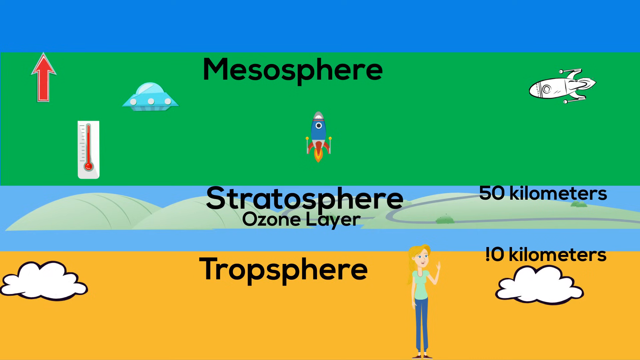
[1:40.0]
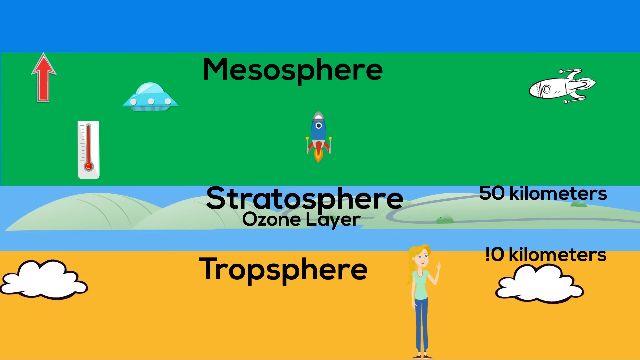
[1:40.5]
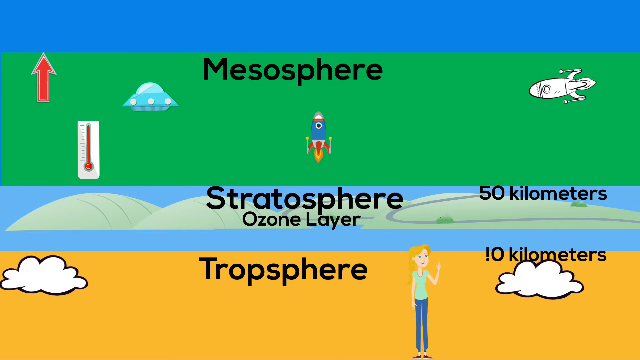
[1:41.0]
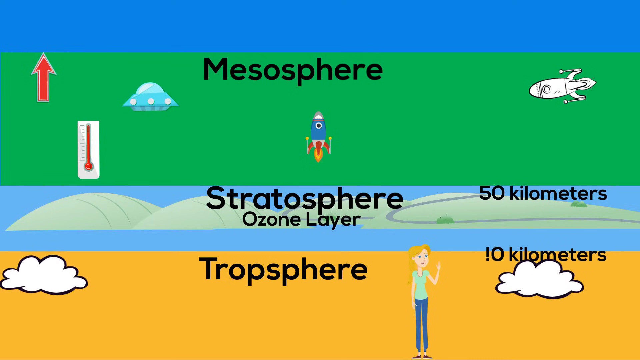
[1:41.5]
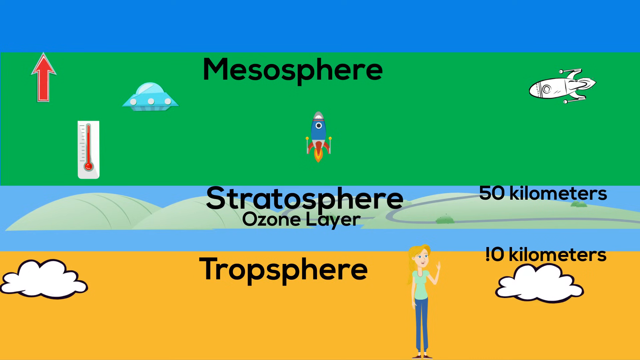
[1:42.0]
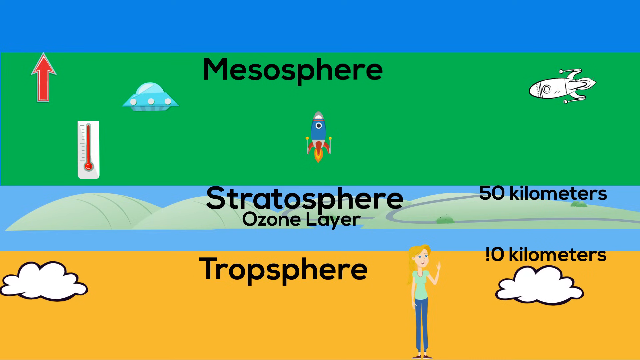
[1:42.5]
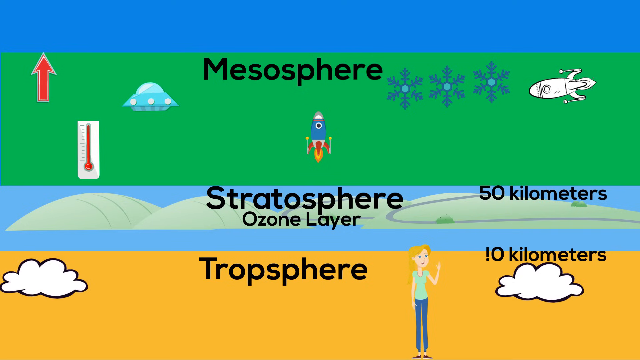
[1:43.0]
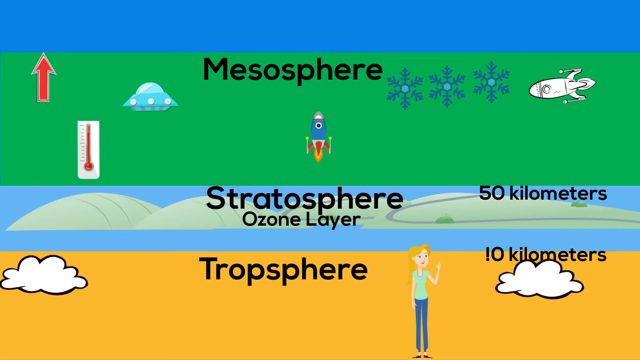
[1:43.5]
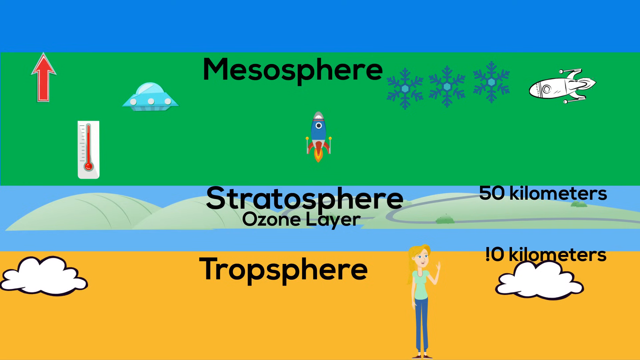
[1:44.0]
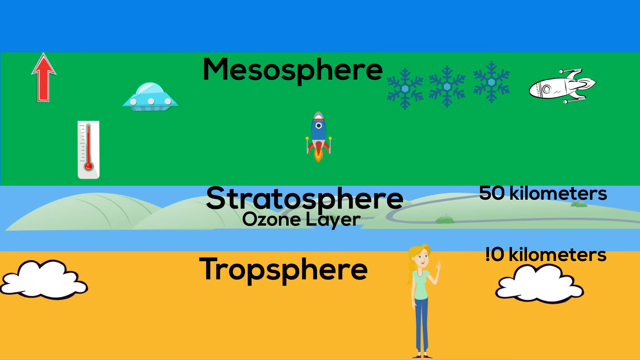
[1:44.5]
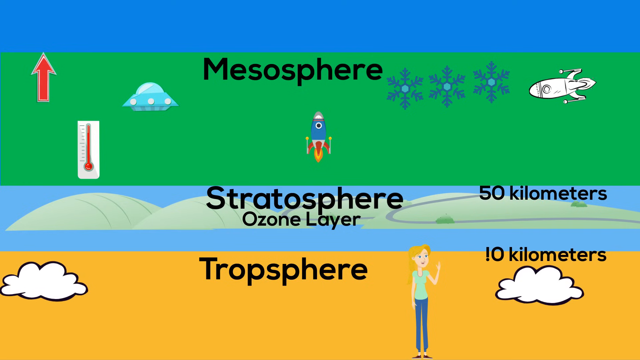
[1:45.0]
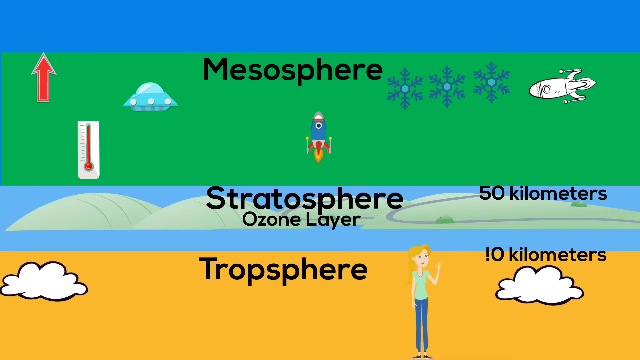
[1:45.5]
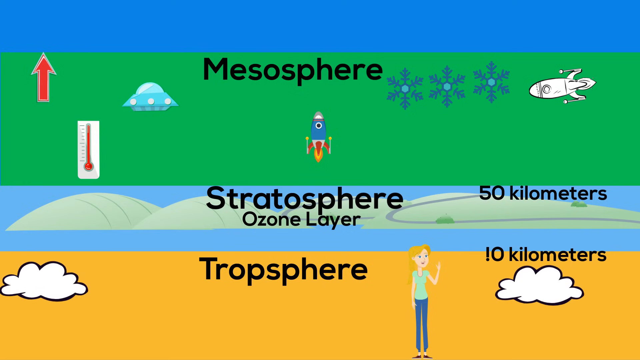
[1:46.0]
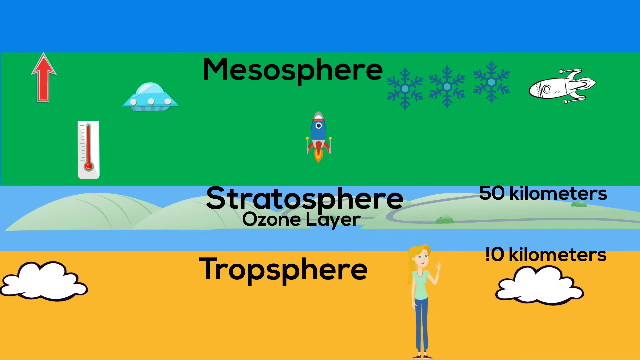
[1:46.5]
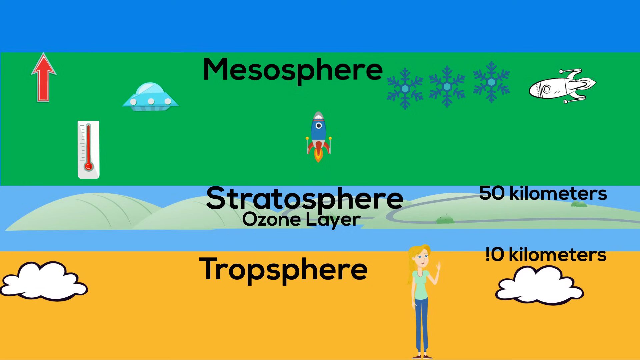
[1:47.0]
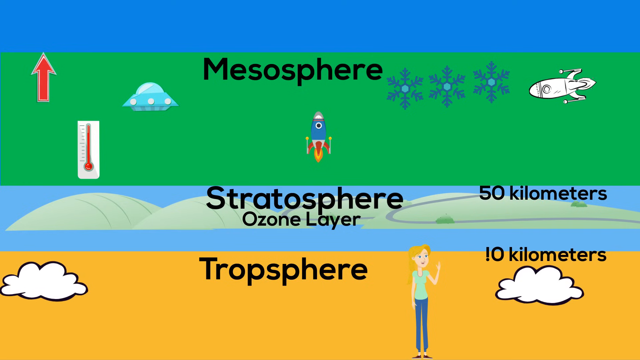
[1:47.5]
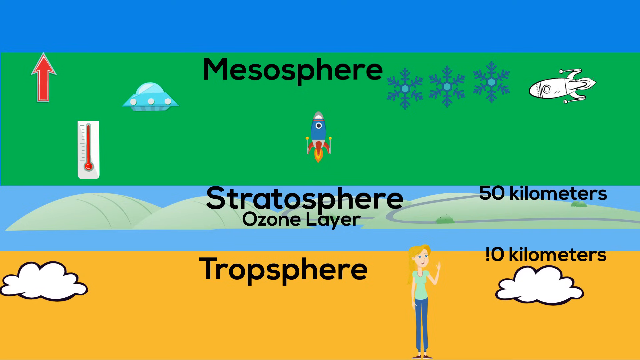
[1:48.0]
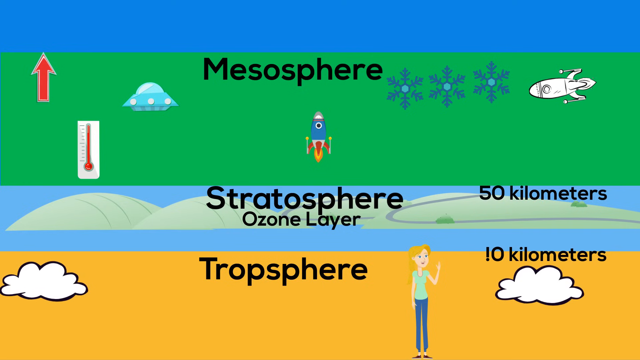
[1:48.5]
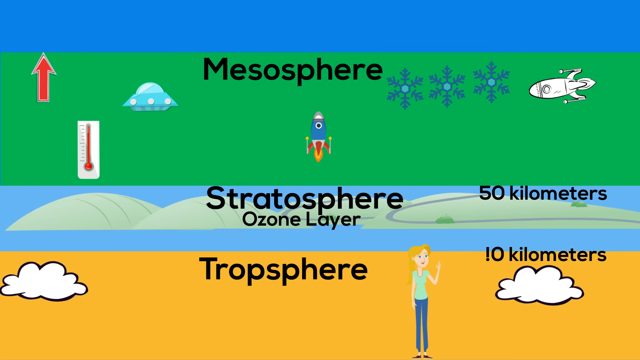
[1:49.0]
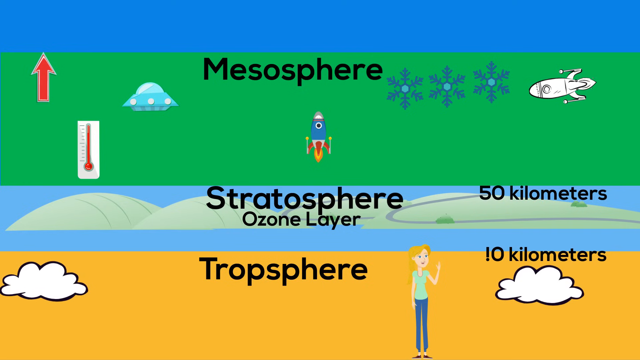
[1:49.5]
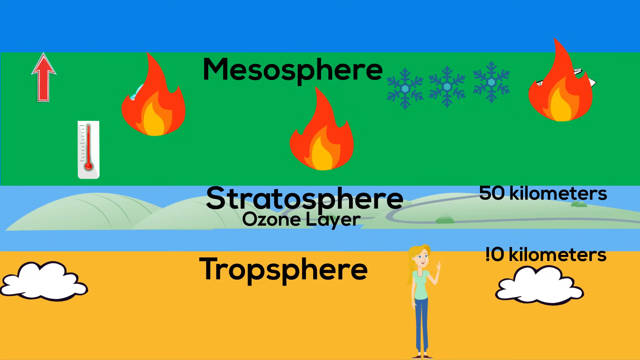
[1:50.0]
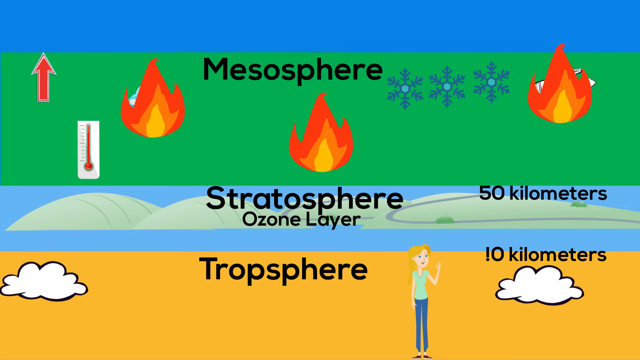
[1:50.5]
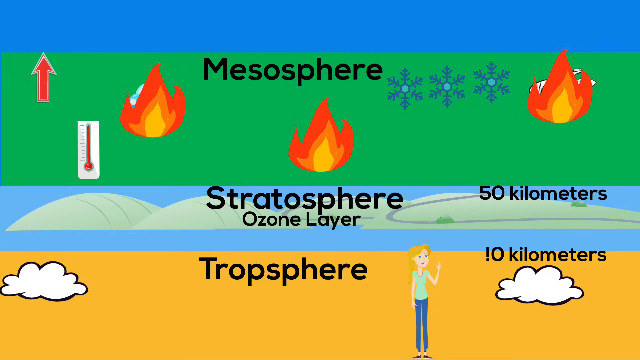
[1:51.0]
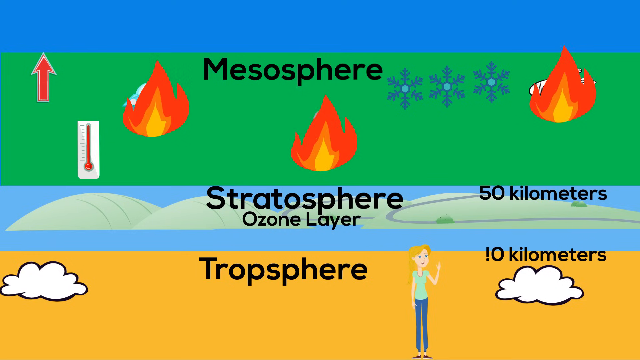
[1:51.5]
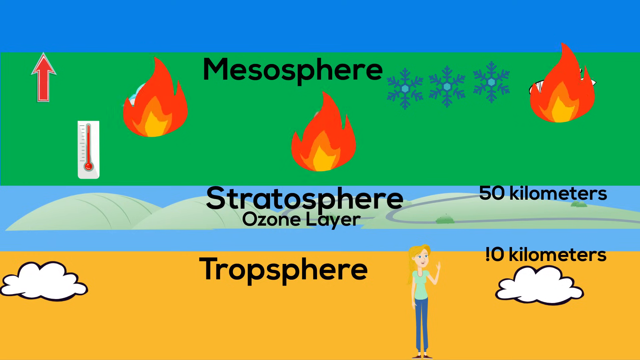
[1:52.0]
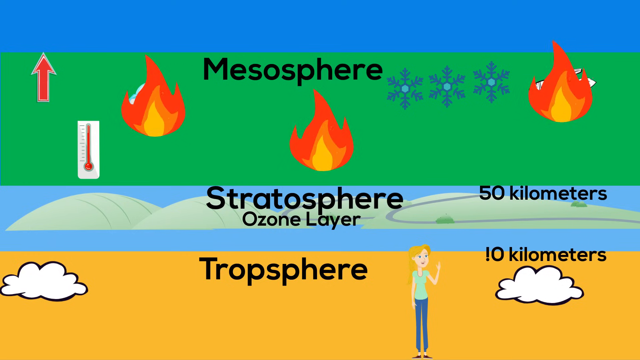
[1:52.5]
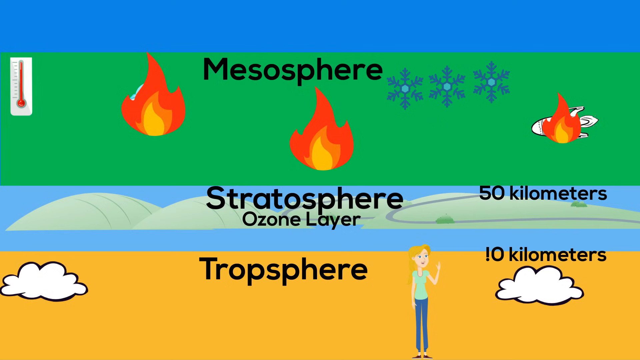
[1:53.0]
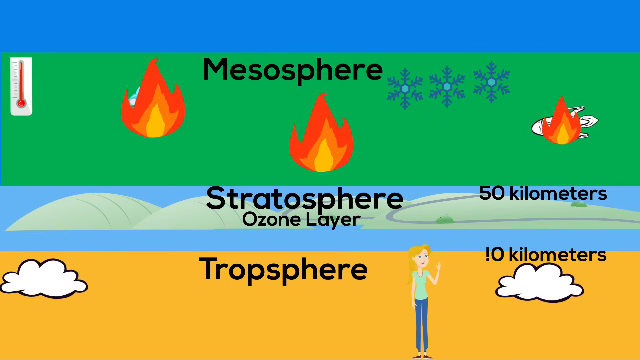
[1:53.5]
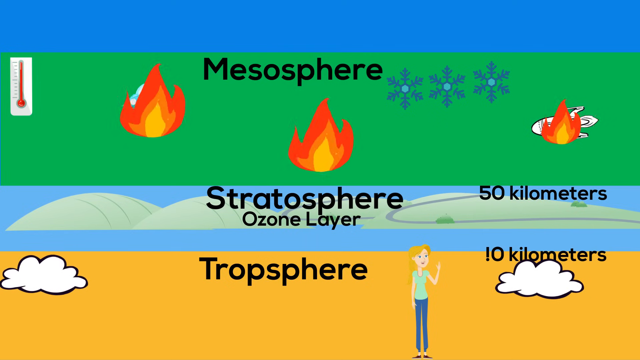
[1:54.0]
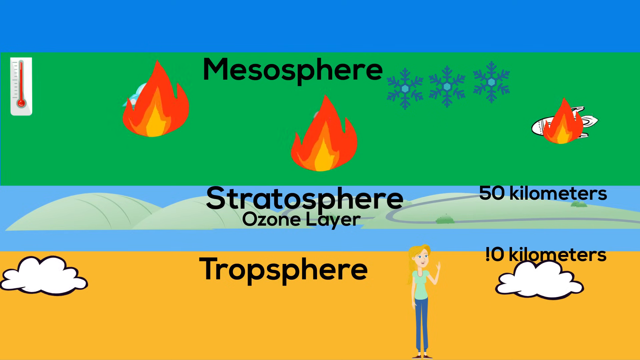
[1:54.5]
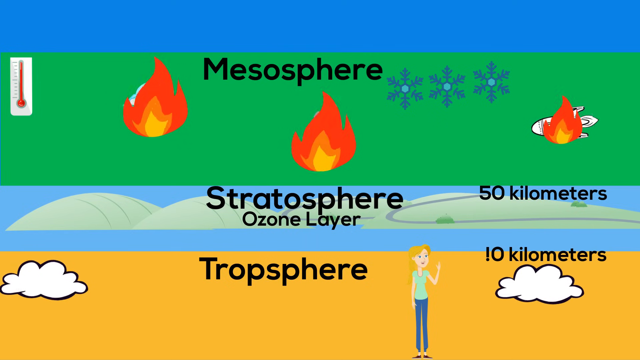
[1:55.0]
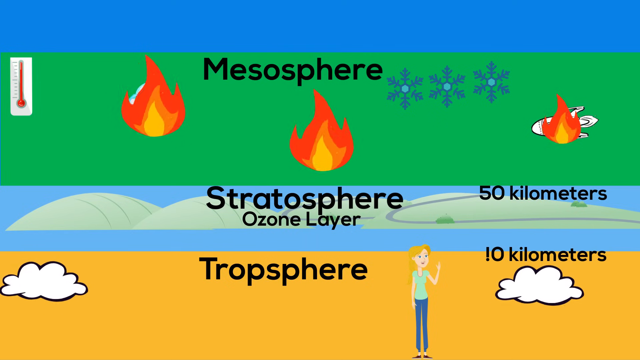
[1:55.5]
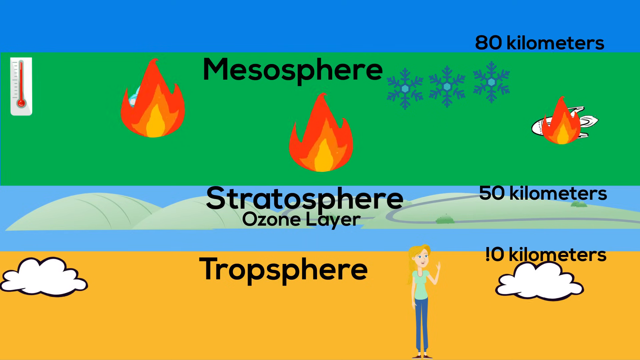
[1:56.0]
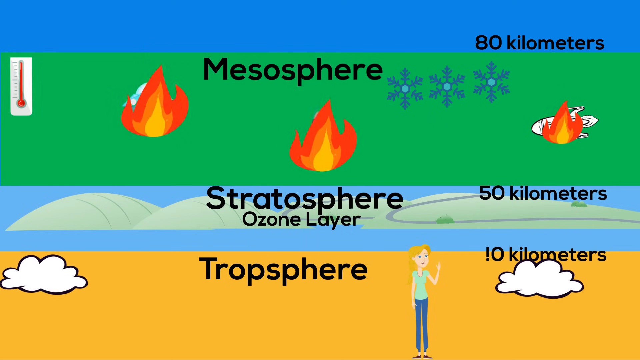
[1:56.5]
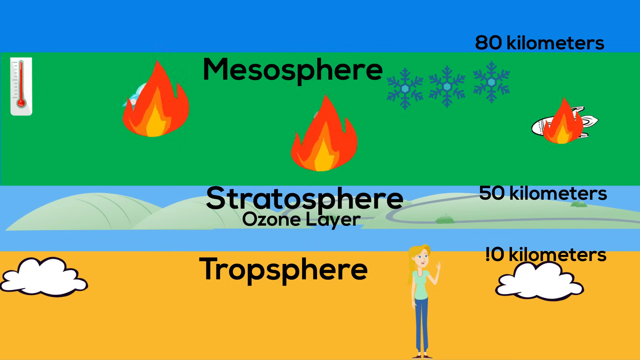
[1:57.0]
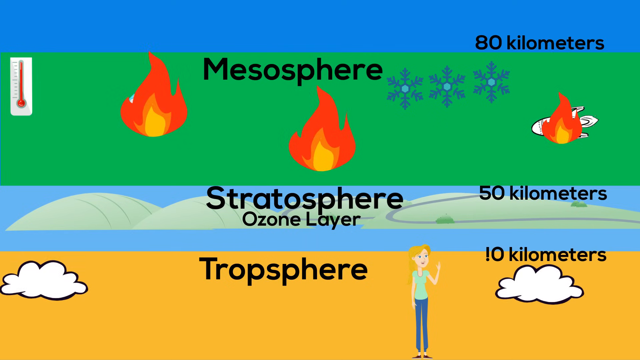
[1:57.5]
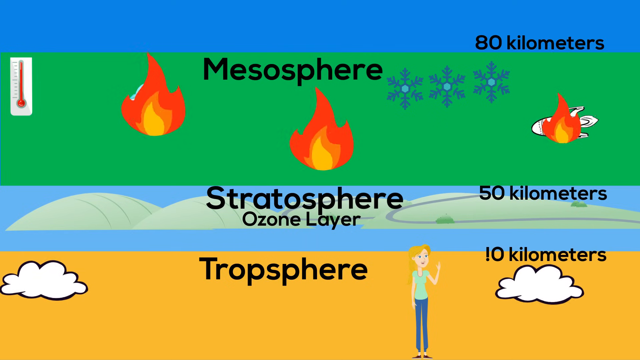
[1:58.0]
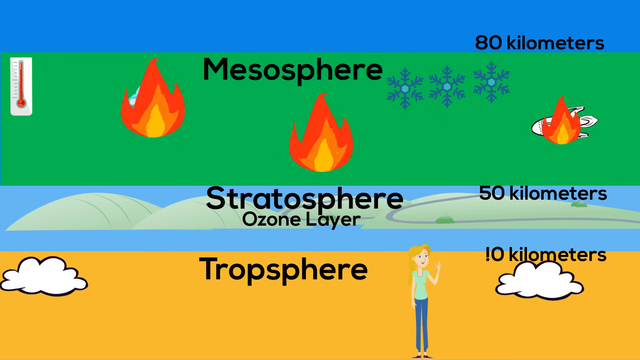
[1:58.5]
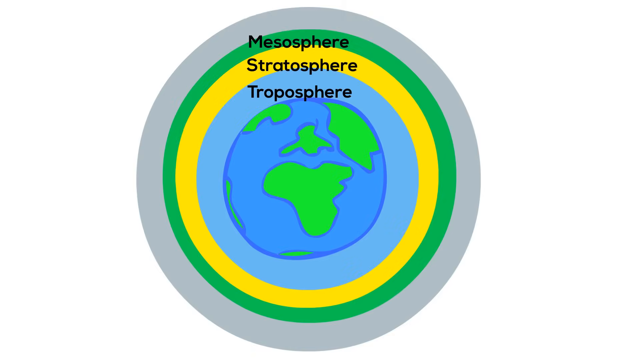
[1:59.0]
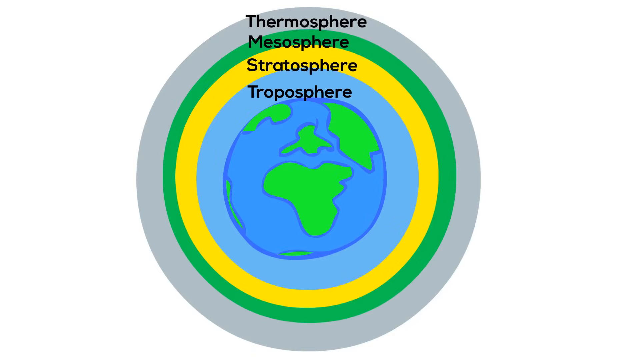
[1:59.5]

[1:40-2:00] More labeled layers appear: the troposphere at the bottom, then the stratosphere with the ozone layer. Above the stratosphere is a big green layer called the mesosphere. In it, a white spaceship on the right flies toward the left, three snowflakes are lined up from left to right, and another spaceship in the middle, blue and red, rockets upward. A roughly turquoise alien ship is at the top left, along with a red arrow at the top left pointing upward. A burning animation then plays over all the ships.